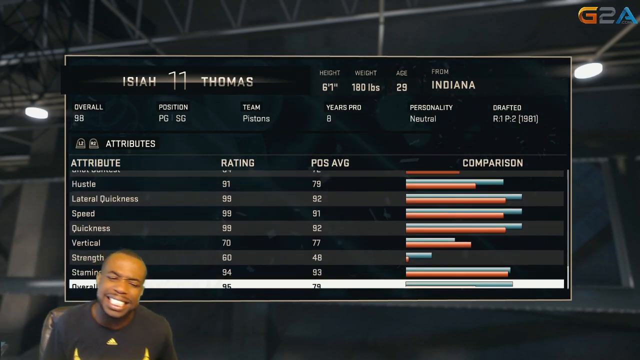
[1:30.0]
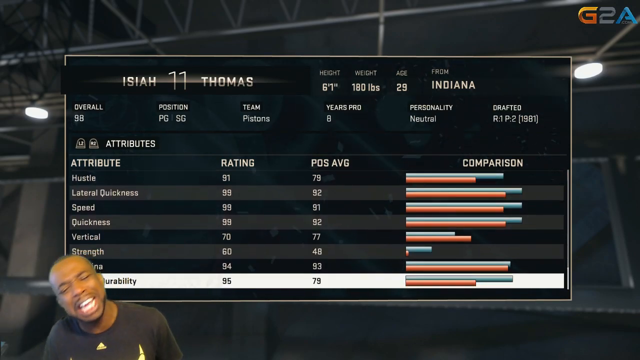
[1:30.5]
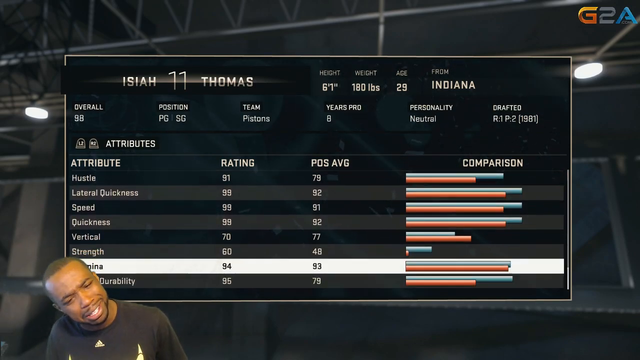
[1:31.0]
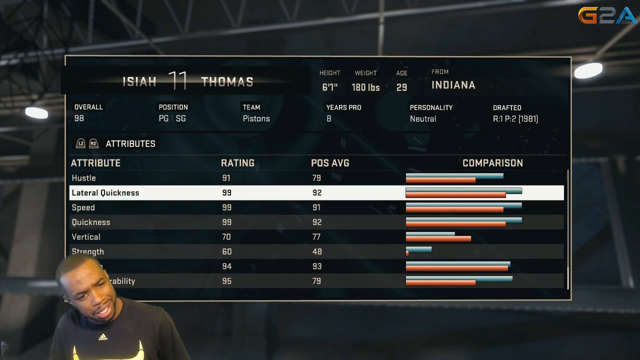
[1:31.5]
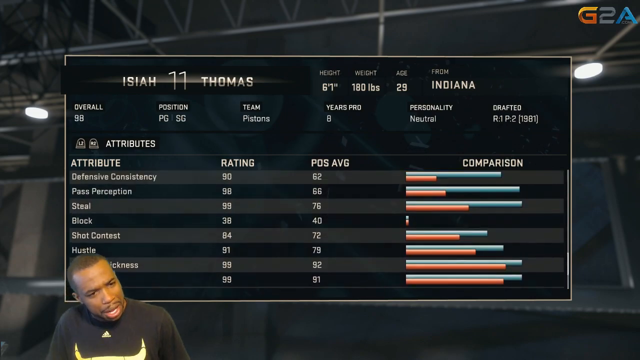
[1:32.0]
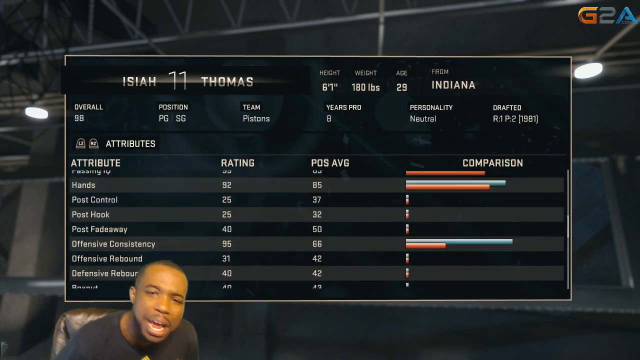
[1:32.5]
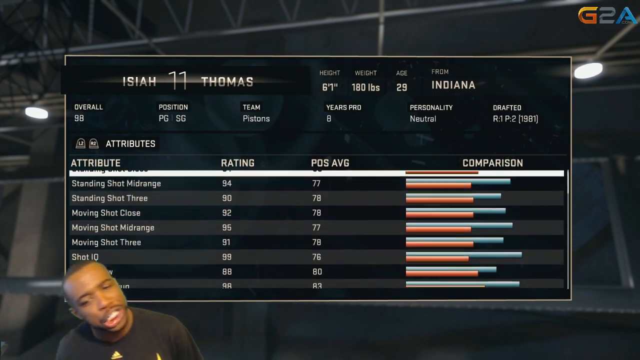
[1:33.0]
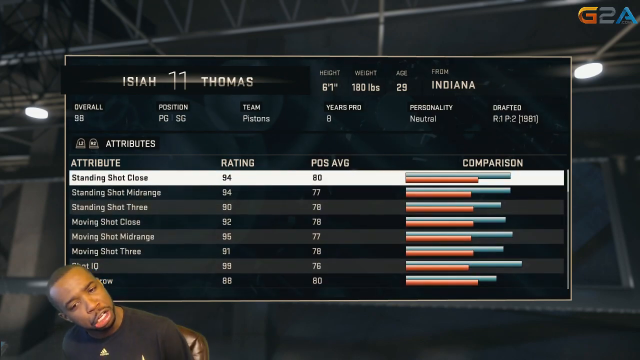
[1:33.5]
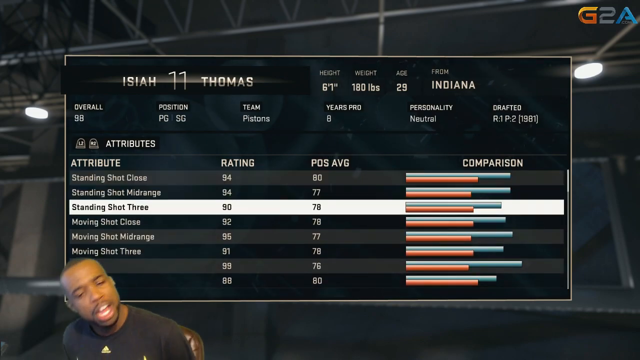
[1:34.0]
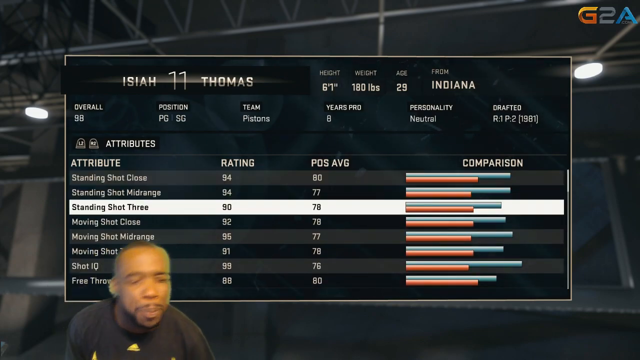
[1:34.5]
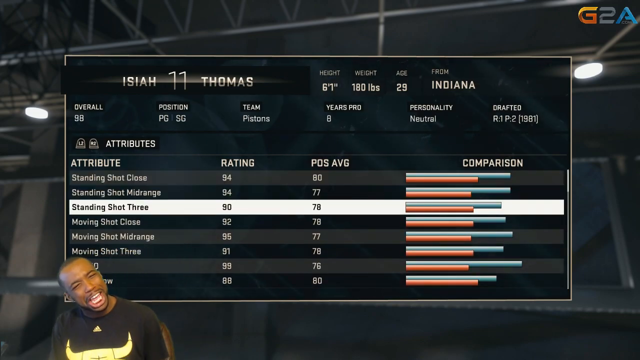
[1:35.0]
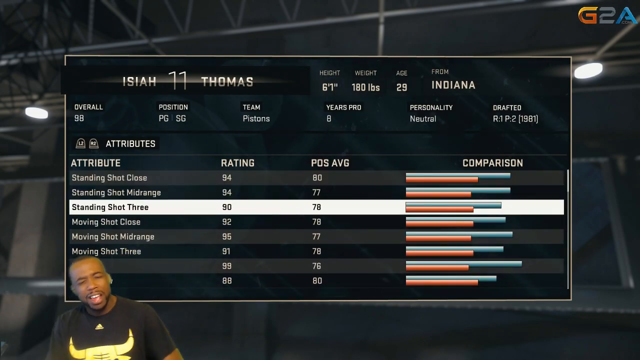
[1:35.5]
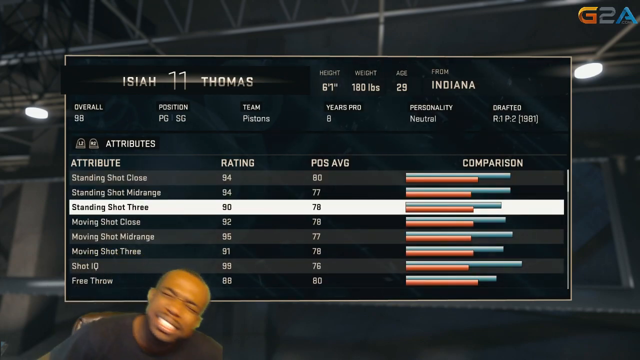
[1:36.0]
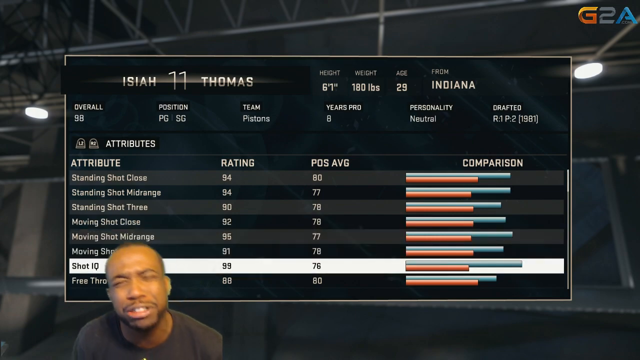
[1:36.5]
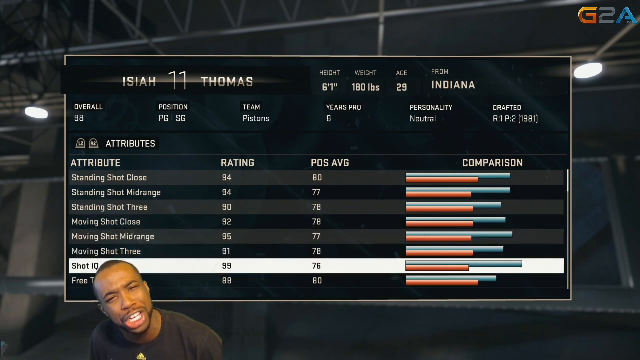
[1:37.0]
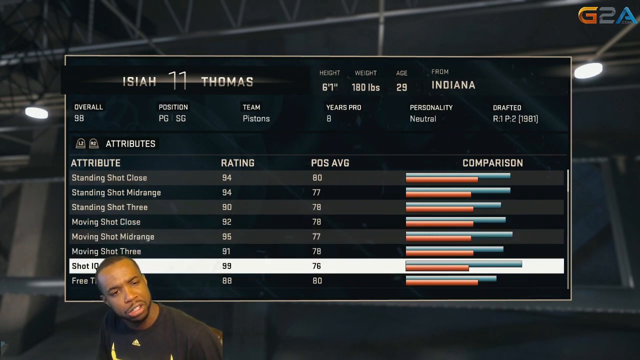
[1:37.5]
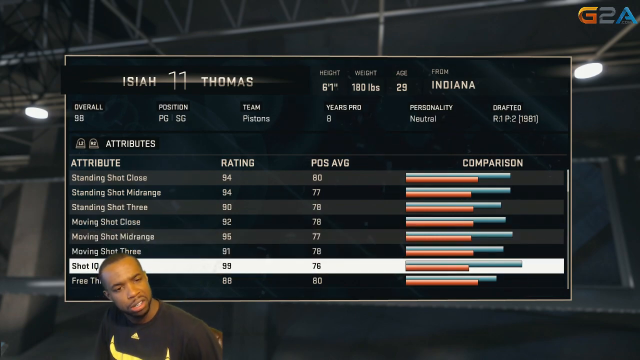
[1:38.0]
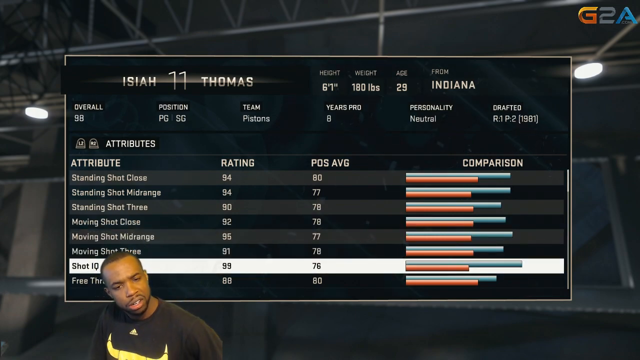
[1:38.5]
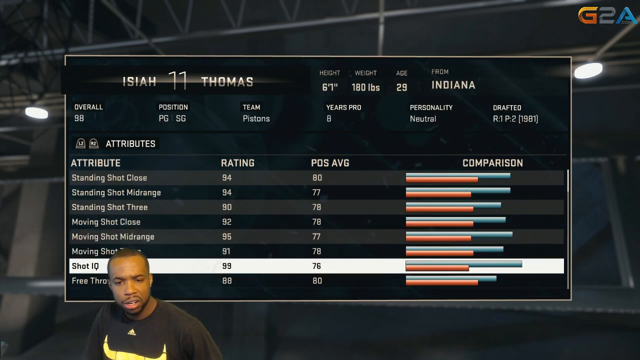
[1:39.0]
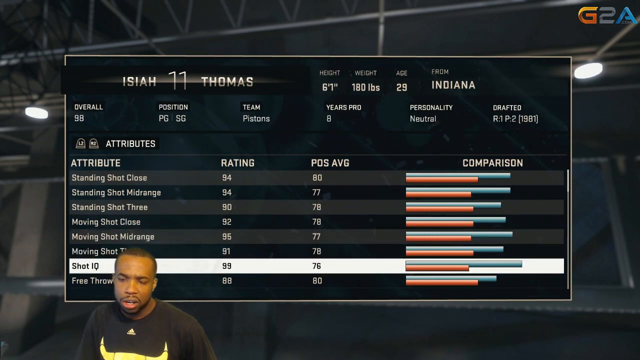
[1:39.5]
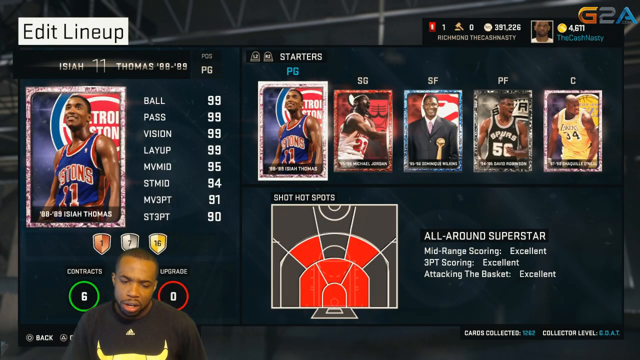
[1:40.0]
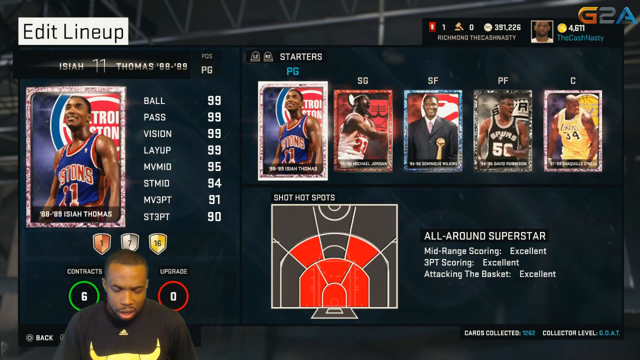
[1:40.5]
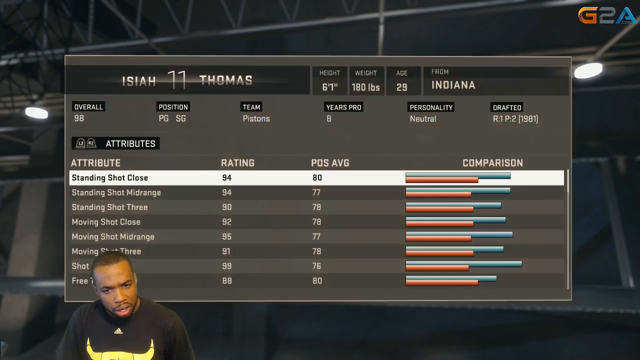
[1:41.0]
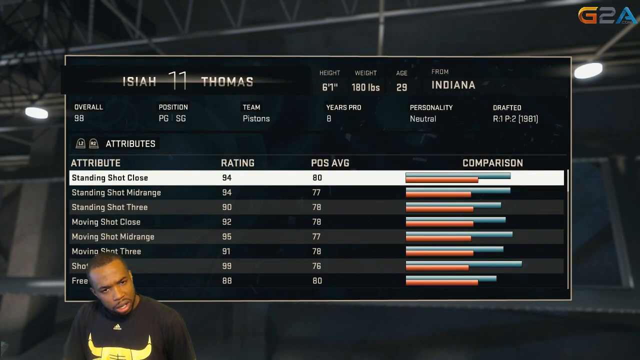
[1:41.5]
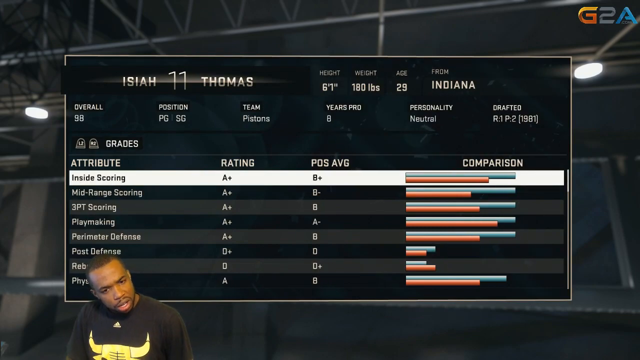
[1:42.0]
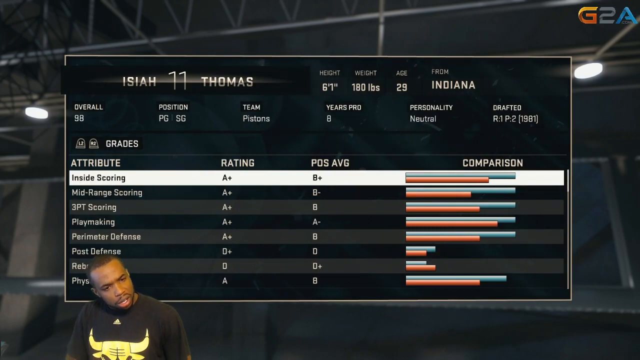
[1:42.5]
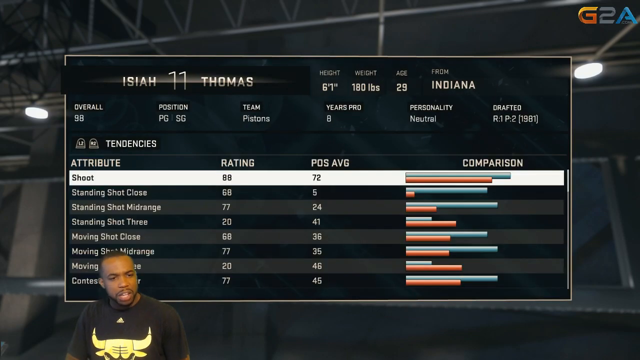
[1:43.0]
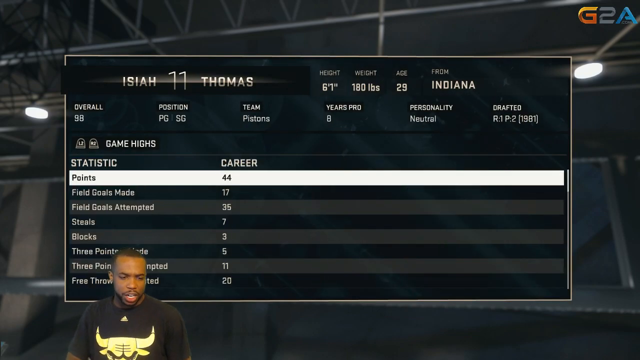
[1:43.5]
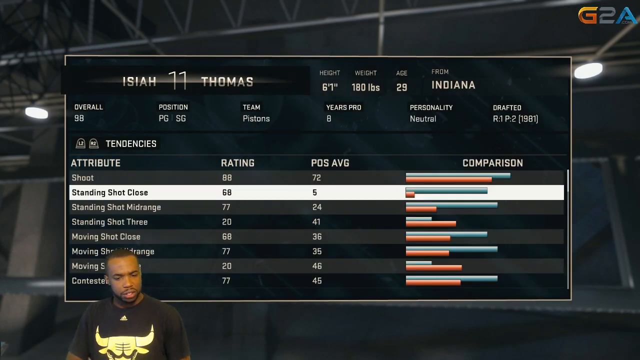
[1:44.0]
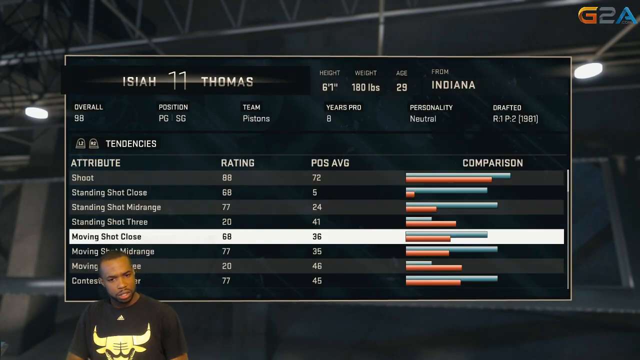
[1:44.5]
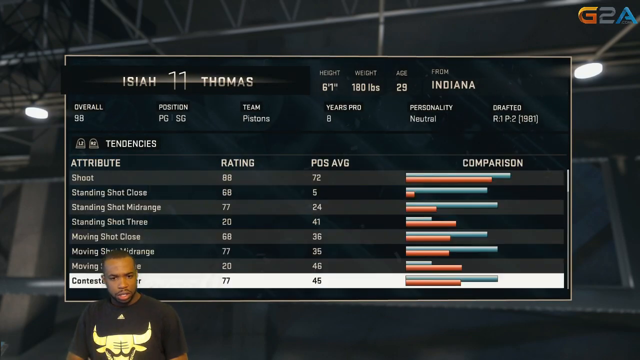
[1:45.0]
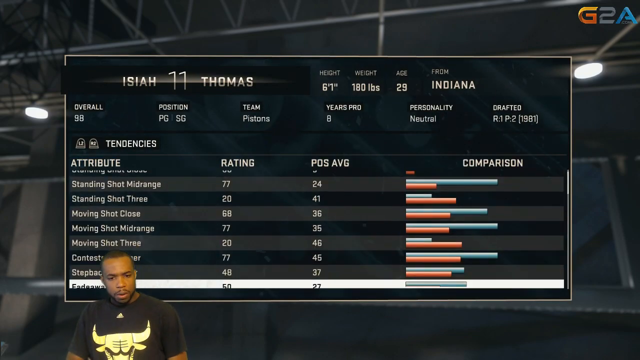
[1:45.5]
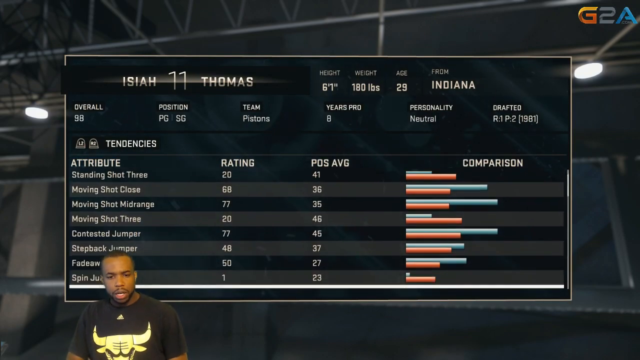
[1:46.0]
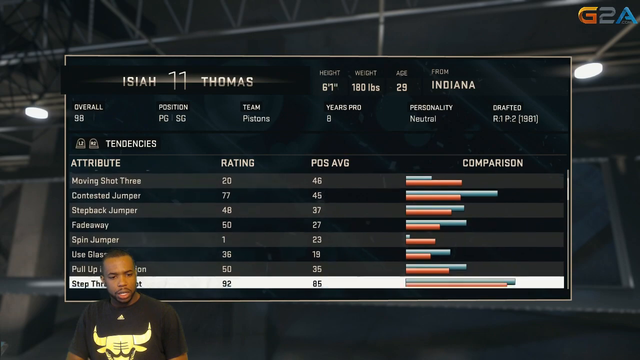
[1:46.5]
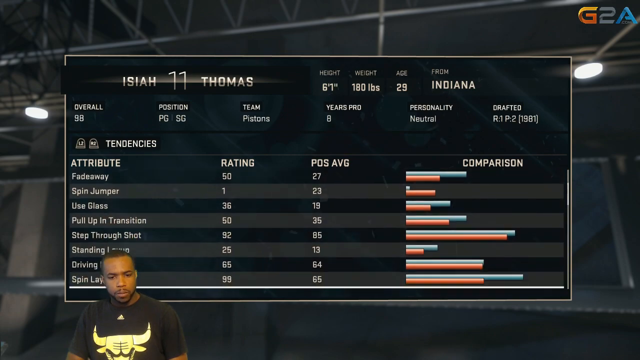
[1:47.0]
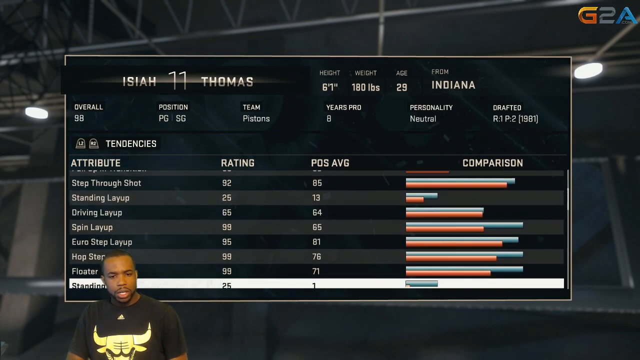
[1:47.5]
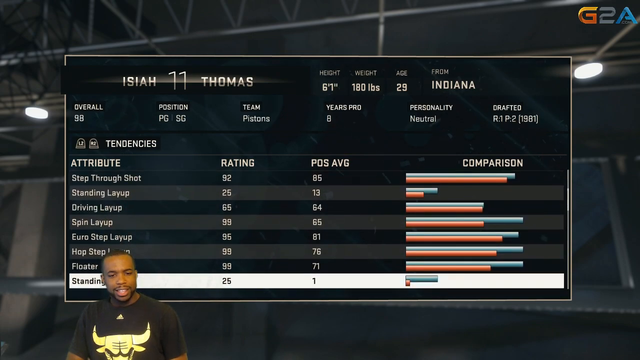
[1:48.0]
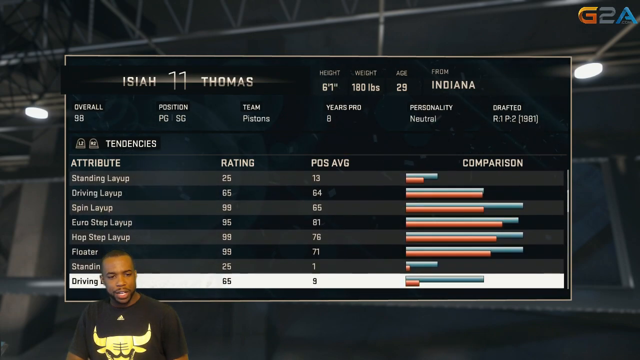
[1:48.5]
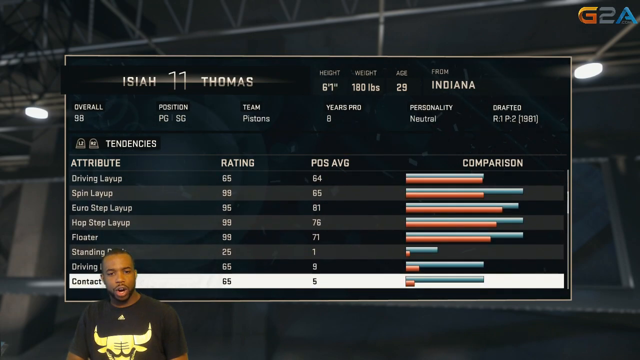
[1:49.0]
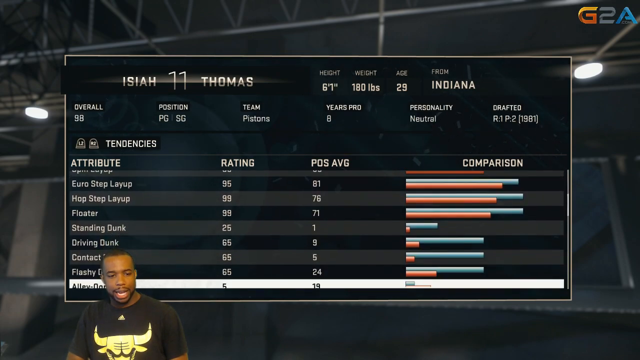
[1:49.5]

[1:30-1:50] The man in the lower left continues as the various statistics for Isaiah Thomas scroll up and down while he talks. His facial expression suggests he is probably very much in favor of this player. The man takes a brief pause, and the screen changes to some playing cards and then to attributes for another card, which is also Isaiah Thomas. Diagrams briefly appear associated with each statistic when it is highlighted, and there are probably a hundred different data points for this player.